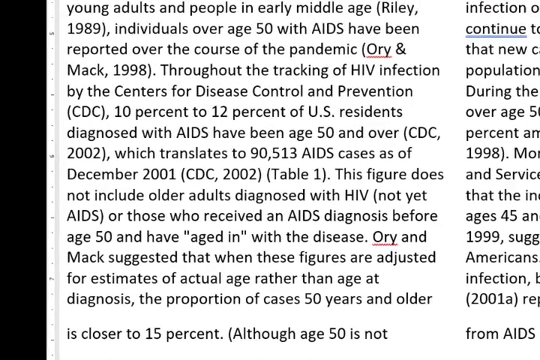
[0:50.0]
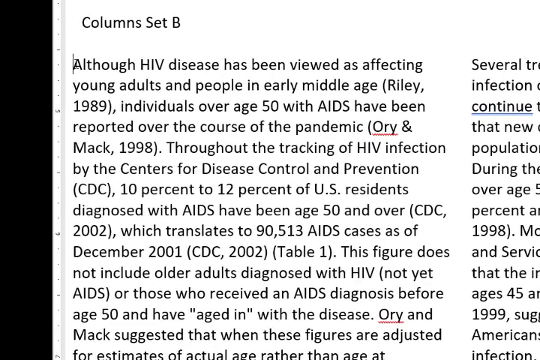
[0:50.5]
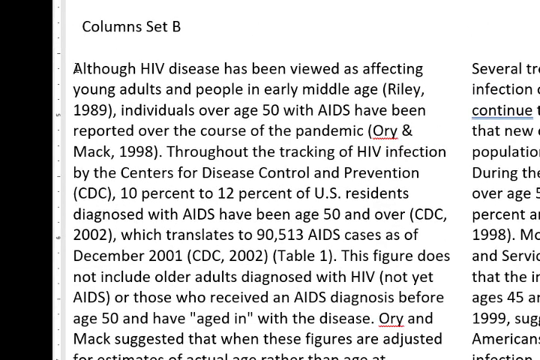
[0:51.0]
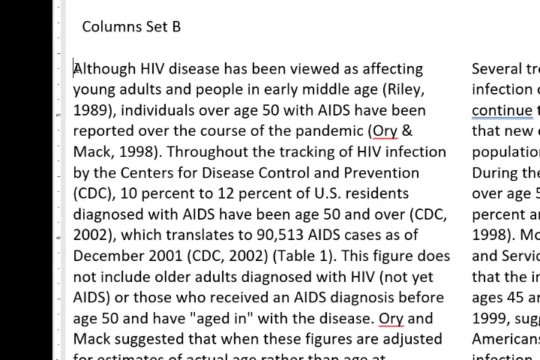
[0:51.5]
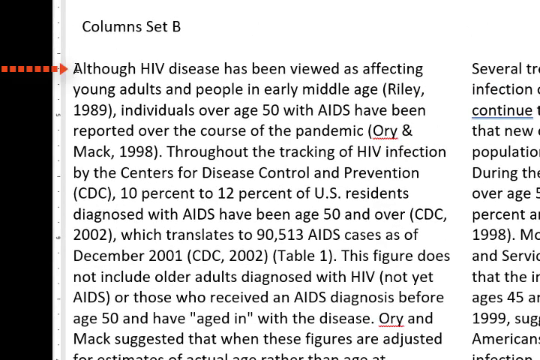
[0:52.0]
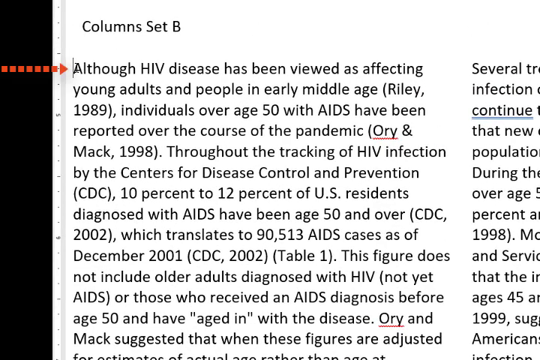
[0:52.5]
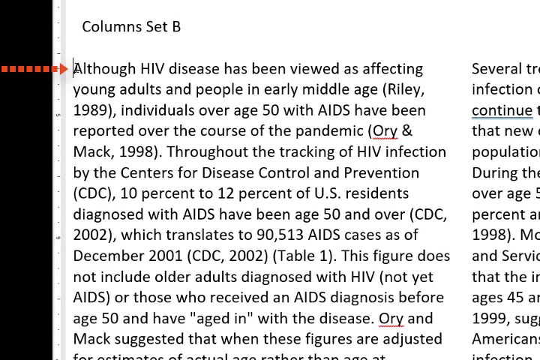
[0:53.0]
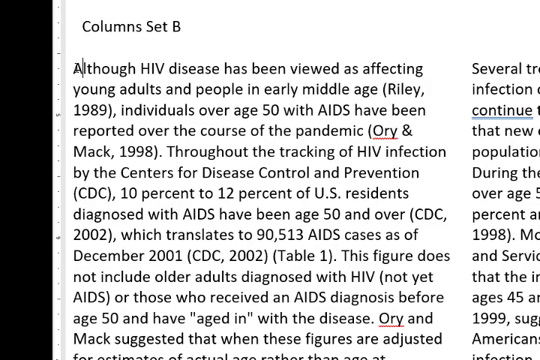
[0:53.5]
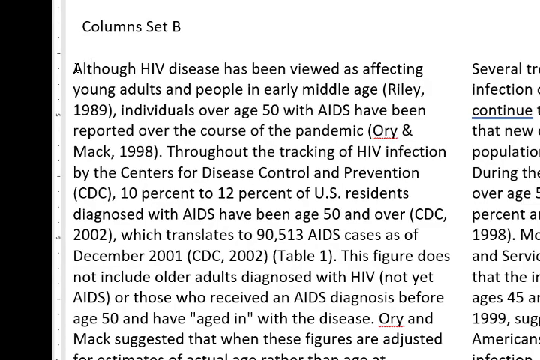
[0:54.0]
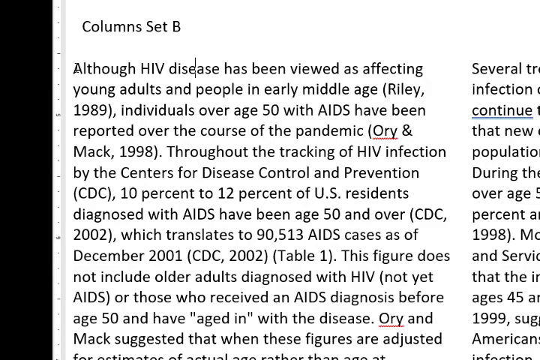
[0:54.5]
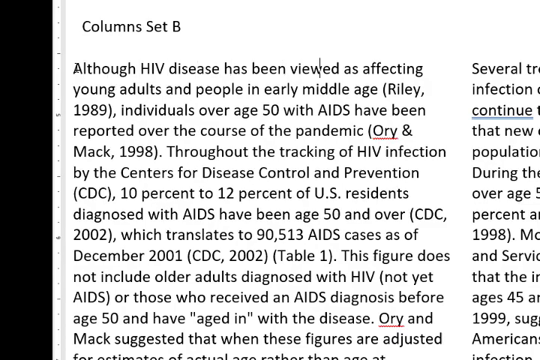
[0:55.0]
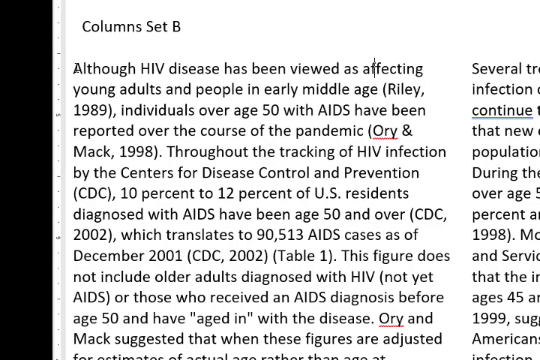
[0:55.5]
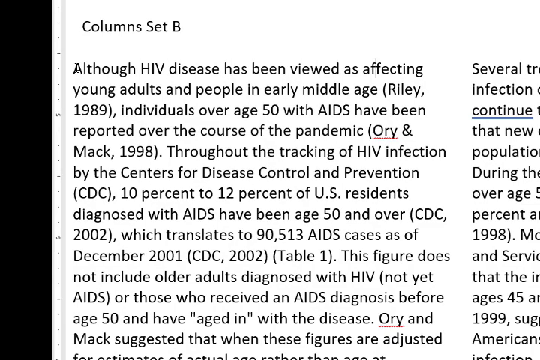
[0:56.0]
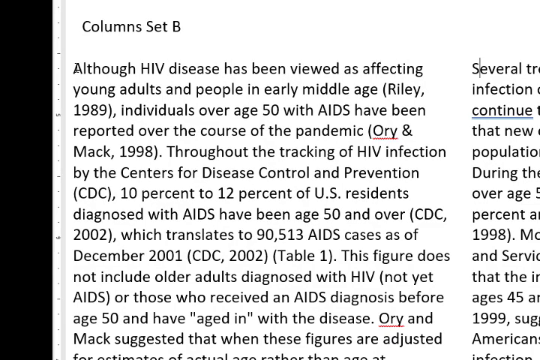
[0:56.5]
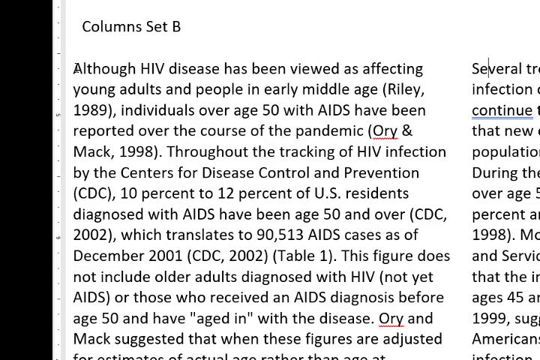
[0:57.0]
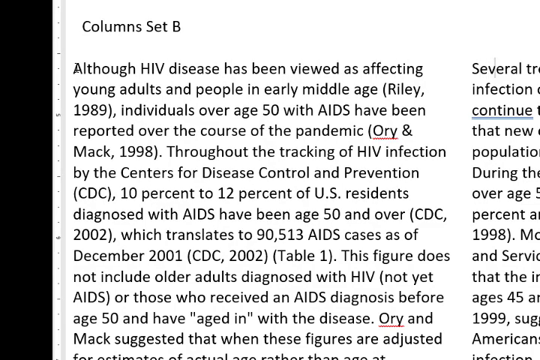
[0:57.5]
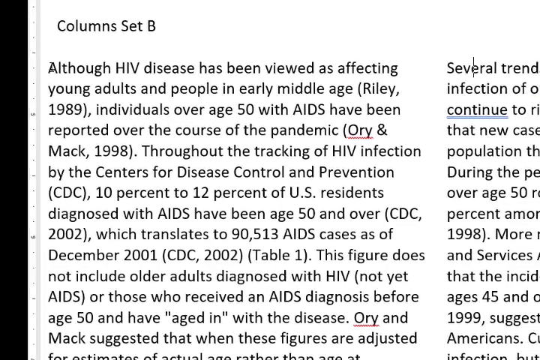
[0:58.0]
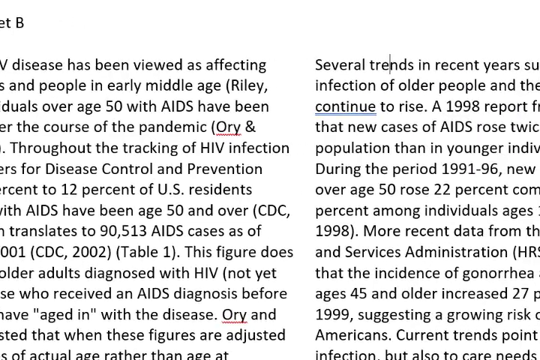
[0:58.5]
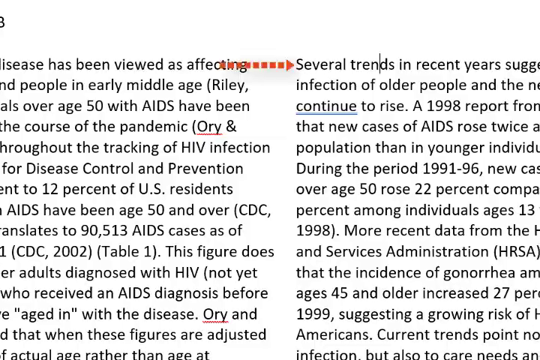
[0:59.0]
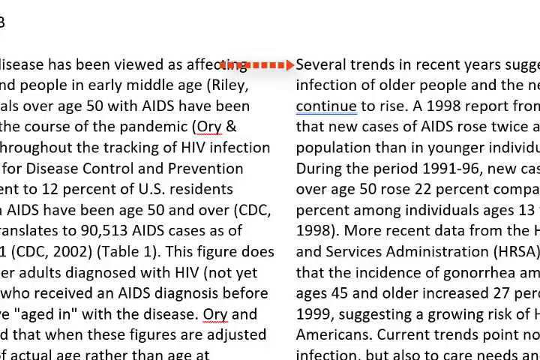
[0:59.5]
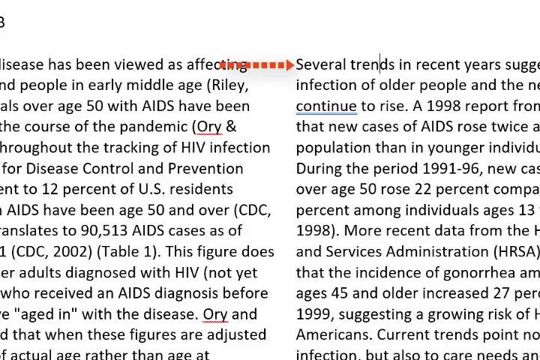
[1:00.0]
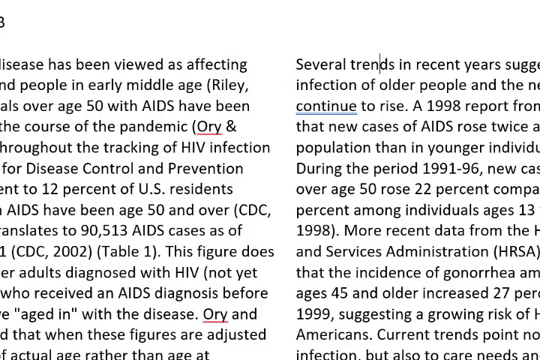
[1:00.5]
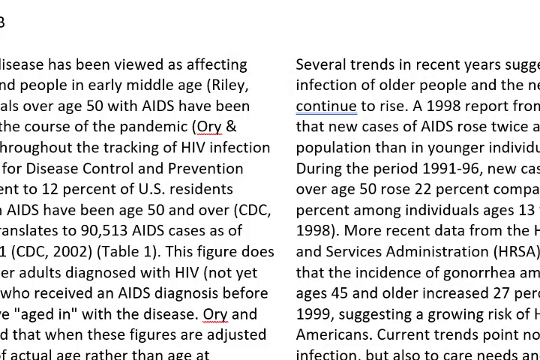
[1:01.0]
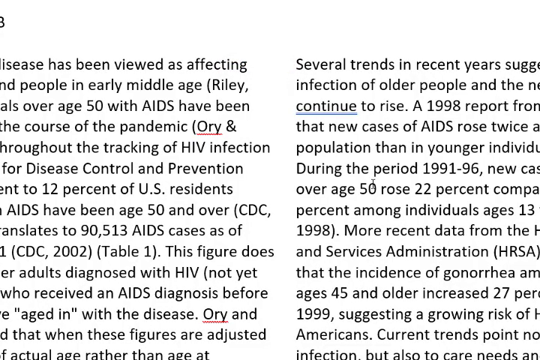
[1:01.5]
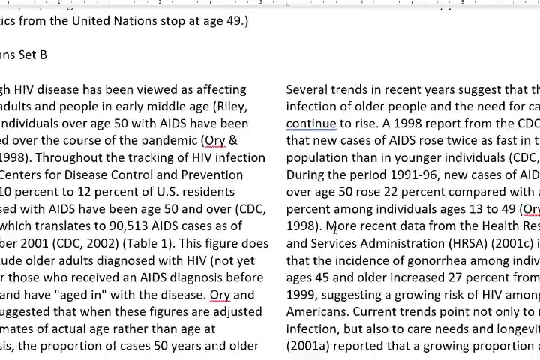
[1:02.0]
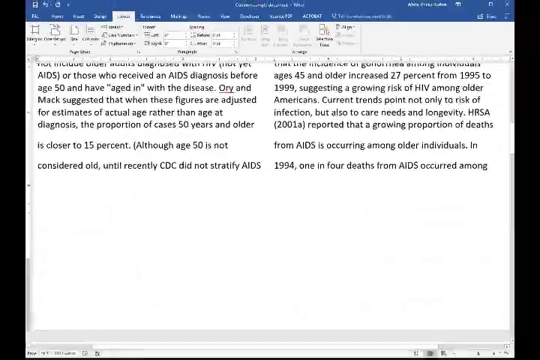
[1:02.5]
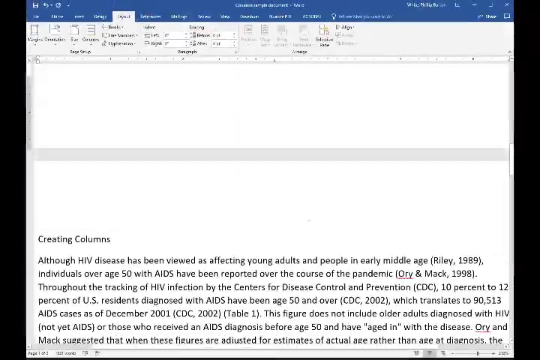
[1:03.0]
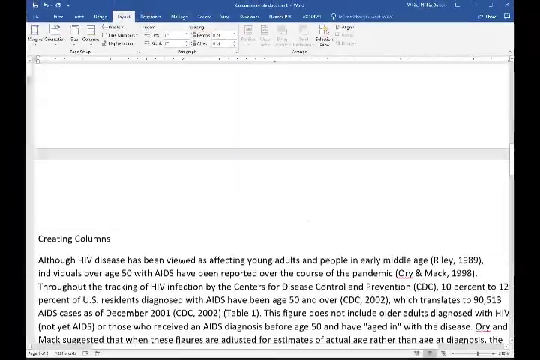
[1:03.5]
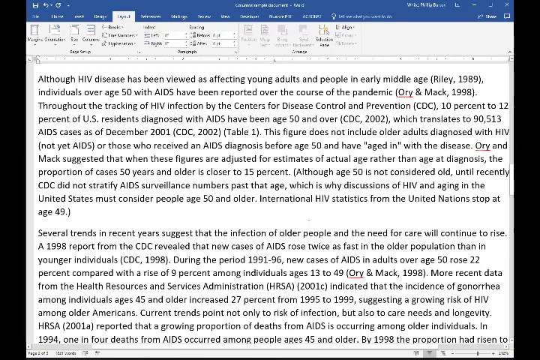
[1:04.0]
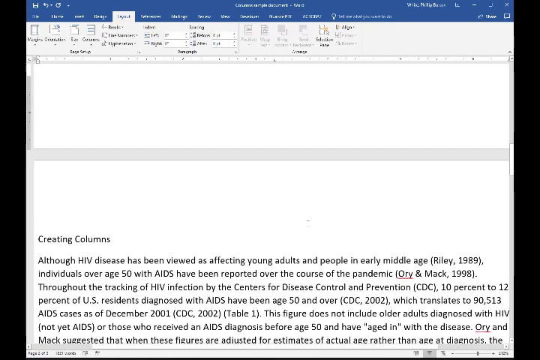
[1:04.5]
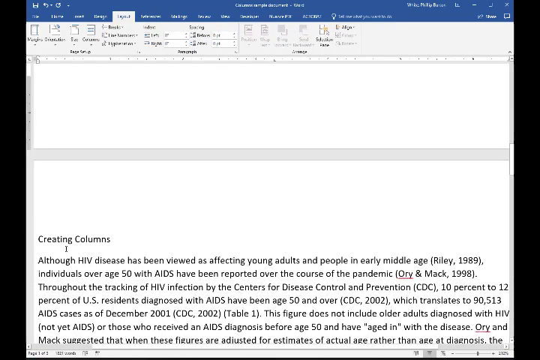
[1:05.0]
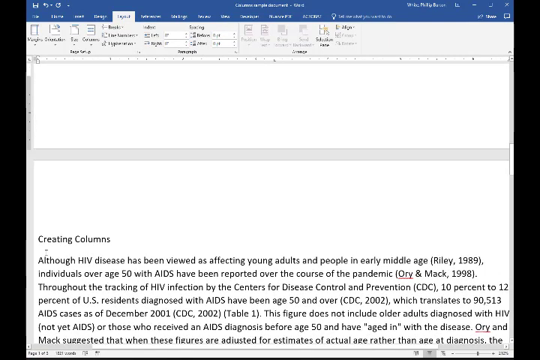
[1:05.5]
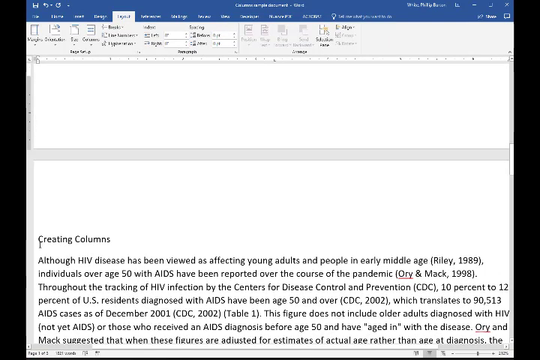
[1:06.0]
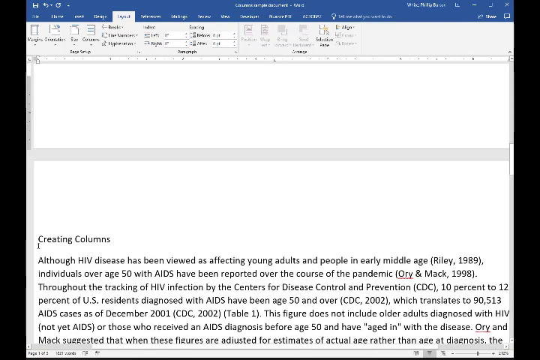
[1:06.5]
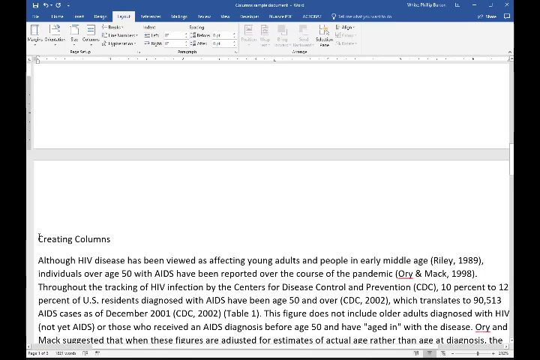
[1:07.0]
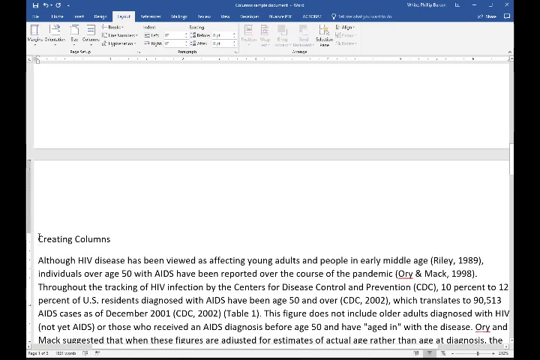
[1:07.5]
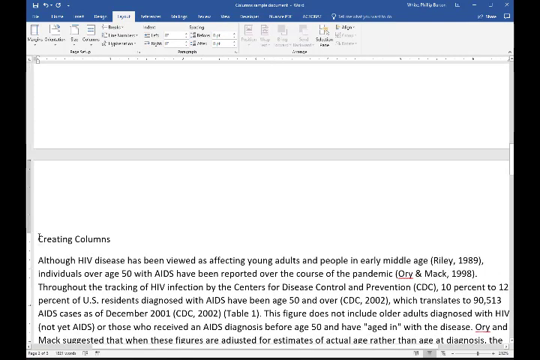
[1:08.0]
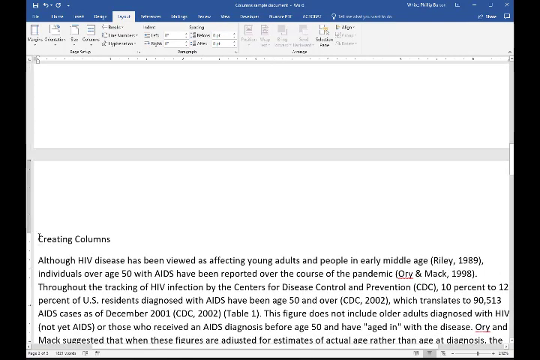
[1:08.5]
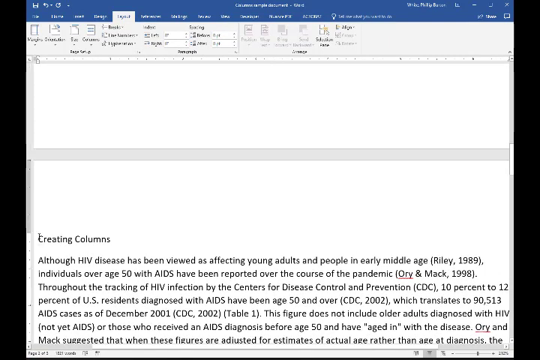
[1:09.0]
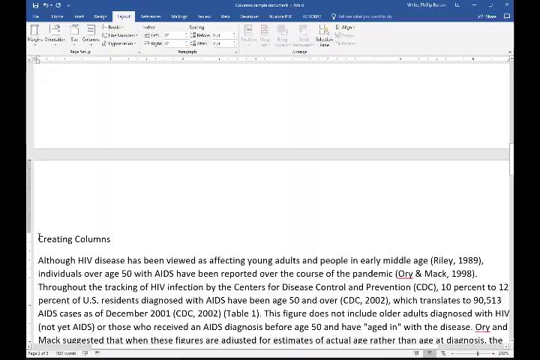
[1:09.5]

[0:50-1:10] The view begins zoomed in on a column, with a text cursor on a line that reads "although HIV disease has been viewed as affecting adults and people in early middle age", resembling column A from before. The mouse adjusts position, and a dotted red arrow appears from the left side of the screen, pointing at the cursor, then disappears. The cursor moves across the line as before, but this time, rather than moving down the column, it jumps to the second column. The red arrow appears for a second to indicate that the cursor has moved across the columns instead of down the single column. The mouse cursor then moves diagonally from the upper left of the screen down to the right and scrolls down. A page break appears, apparently indicating the document is in print view. At the bottom of the screen is a new section that says "creating columns", showing the same document in a single column. The same facts about HIV are presented in each case, but the layout style is different.